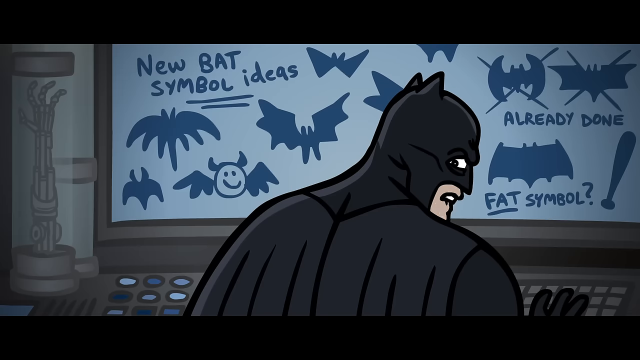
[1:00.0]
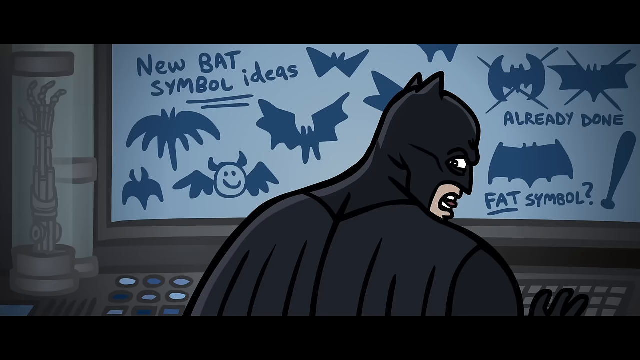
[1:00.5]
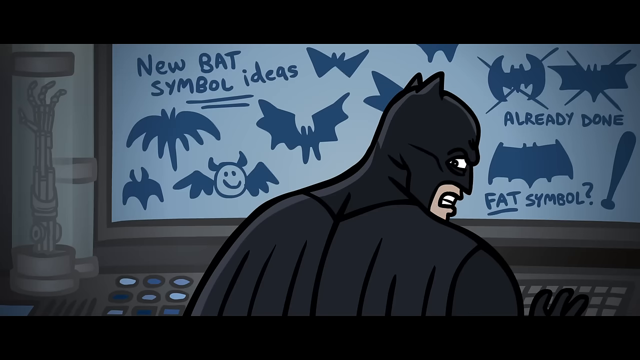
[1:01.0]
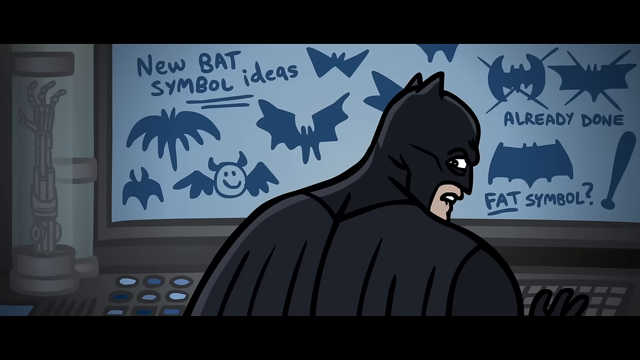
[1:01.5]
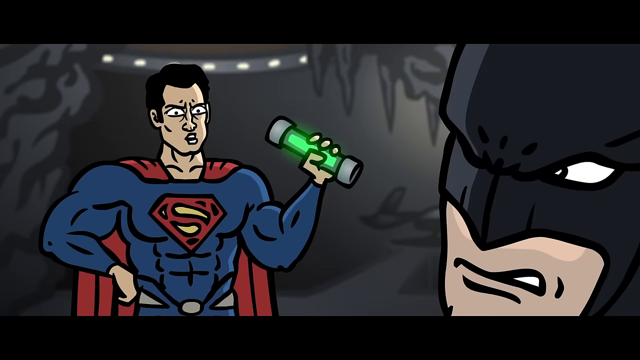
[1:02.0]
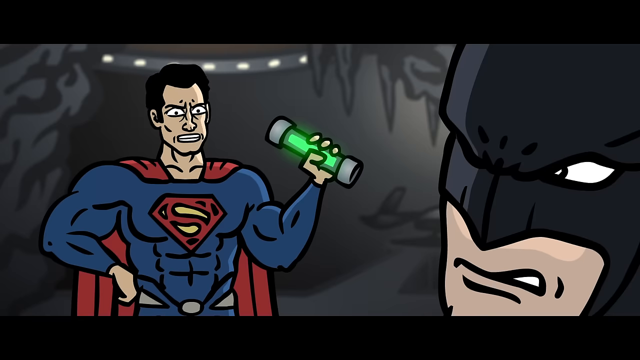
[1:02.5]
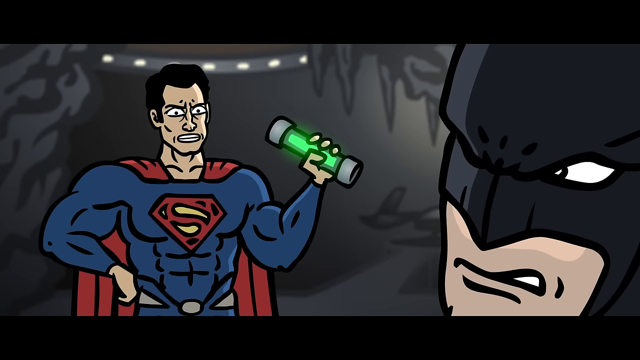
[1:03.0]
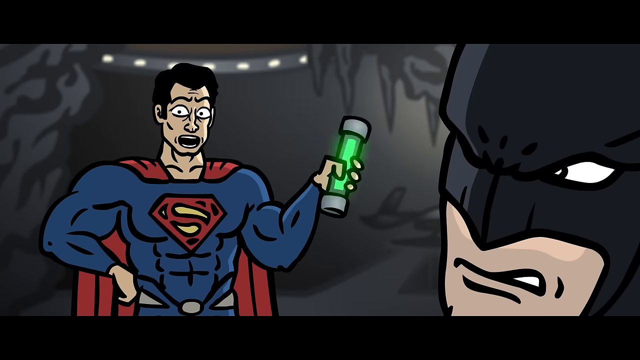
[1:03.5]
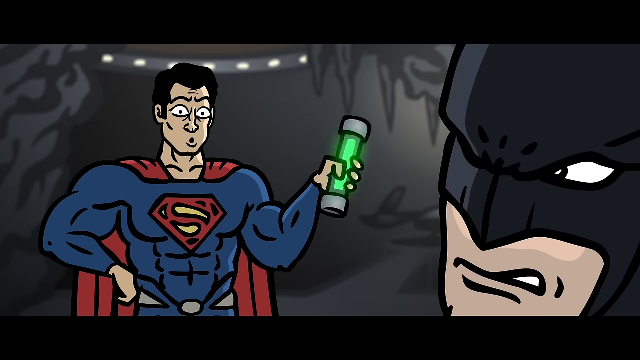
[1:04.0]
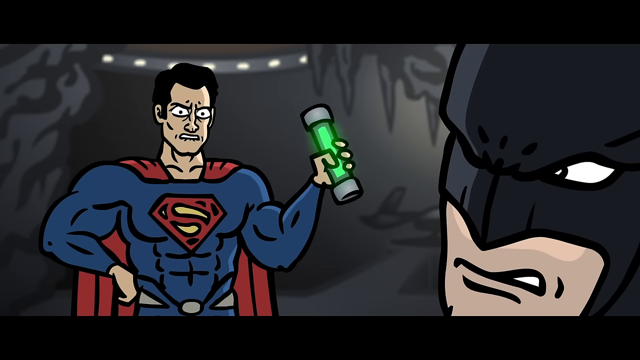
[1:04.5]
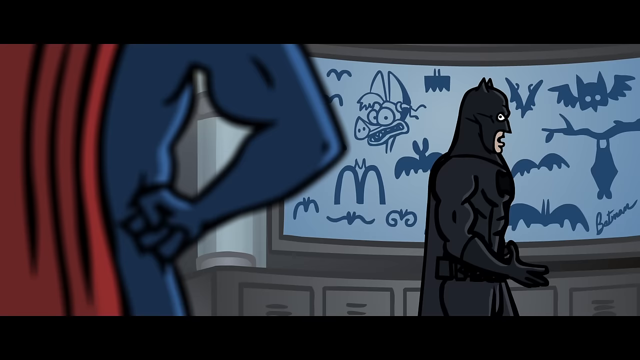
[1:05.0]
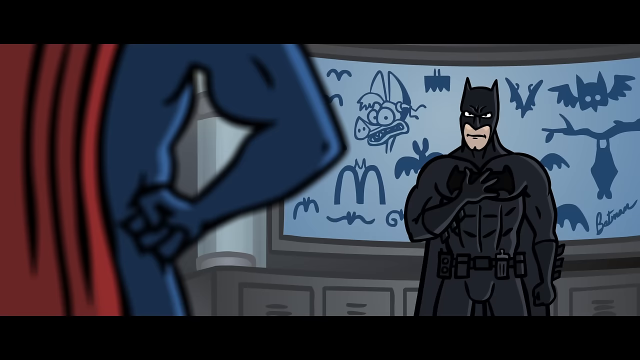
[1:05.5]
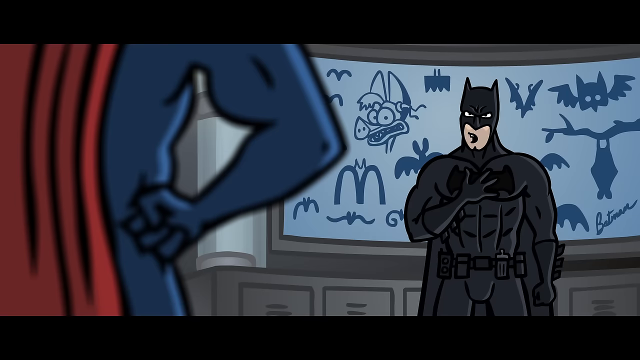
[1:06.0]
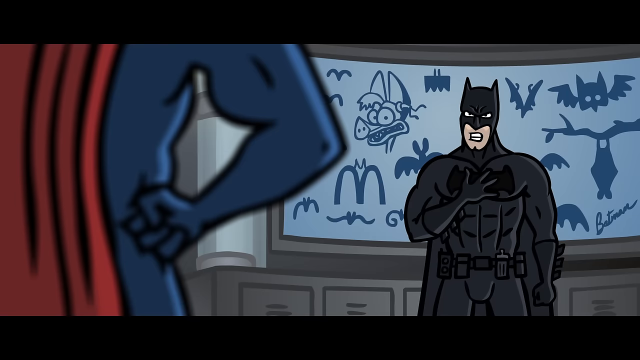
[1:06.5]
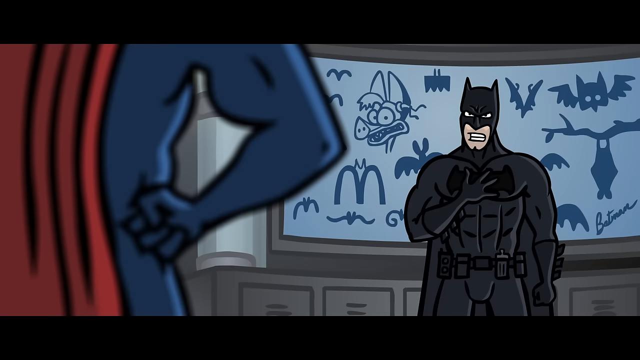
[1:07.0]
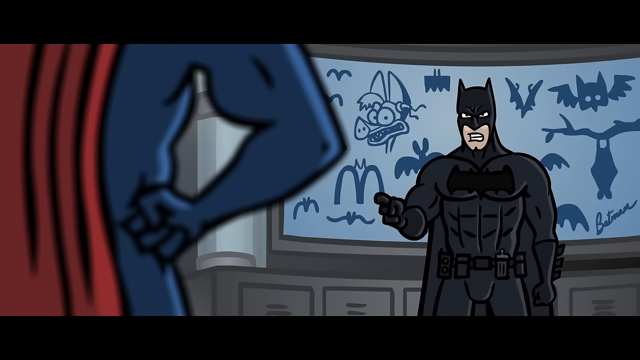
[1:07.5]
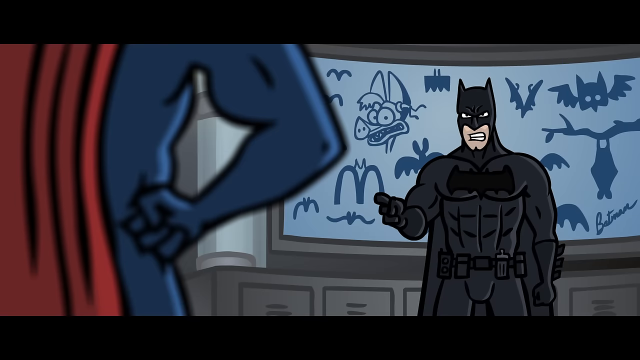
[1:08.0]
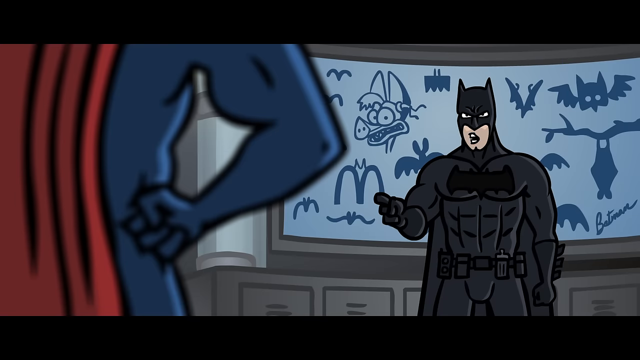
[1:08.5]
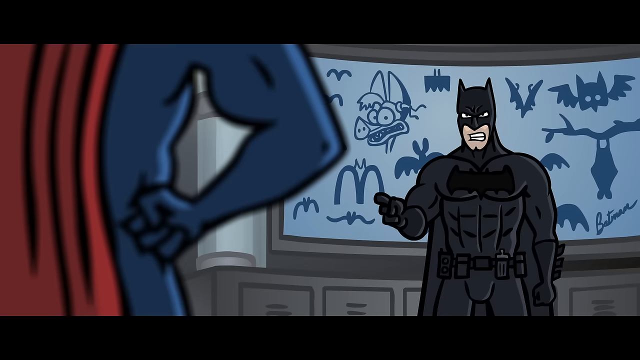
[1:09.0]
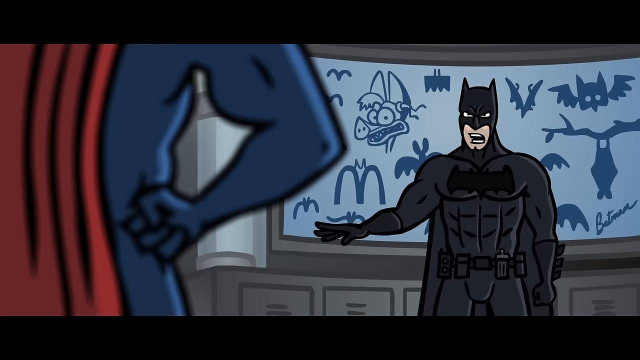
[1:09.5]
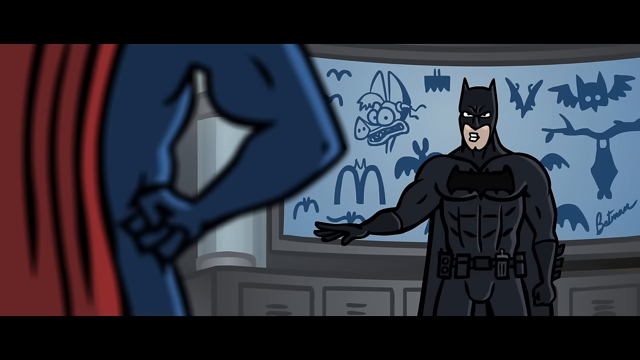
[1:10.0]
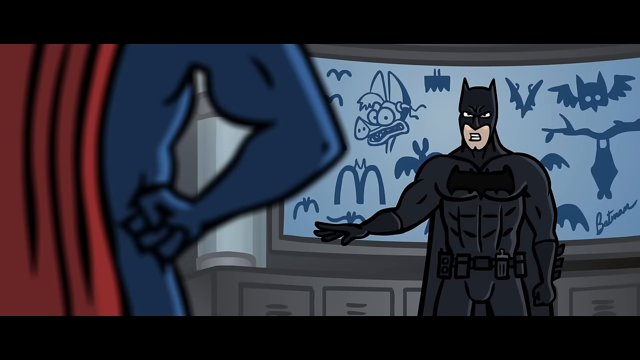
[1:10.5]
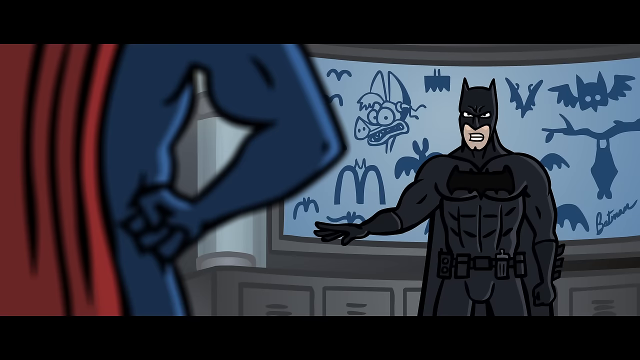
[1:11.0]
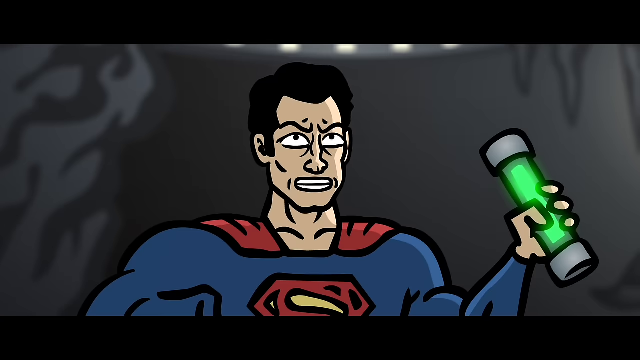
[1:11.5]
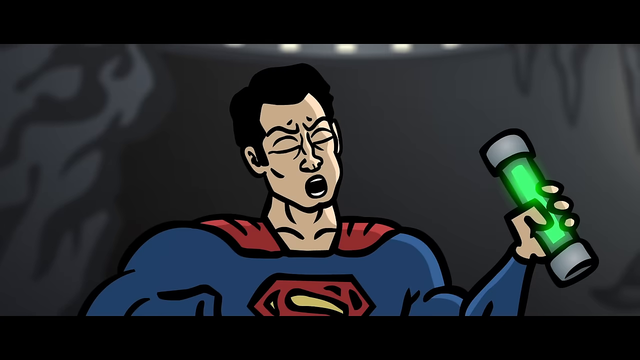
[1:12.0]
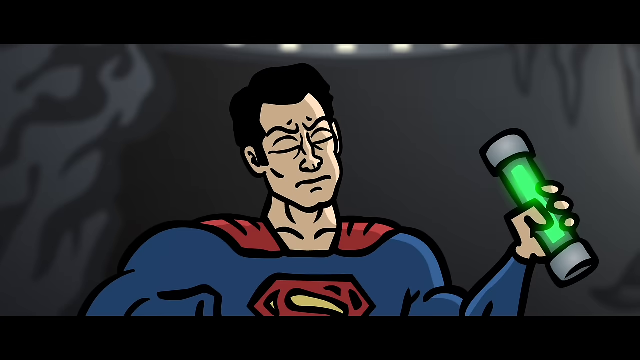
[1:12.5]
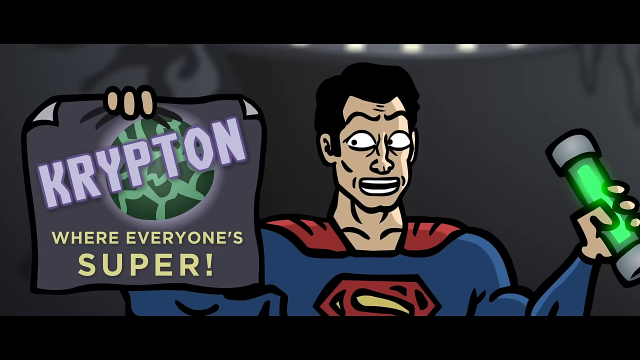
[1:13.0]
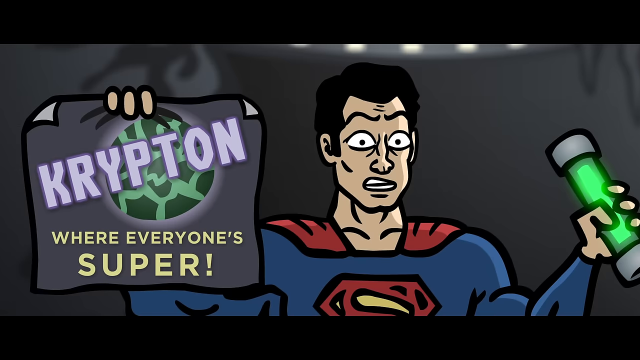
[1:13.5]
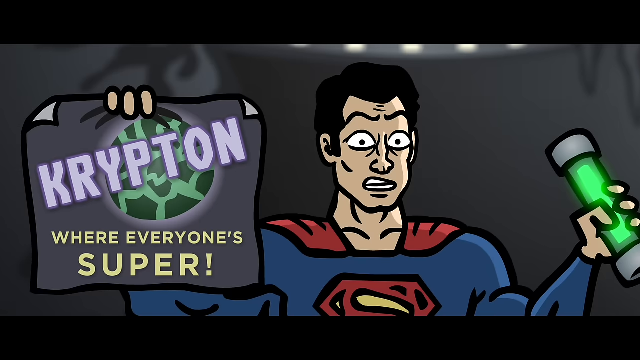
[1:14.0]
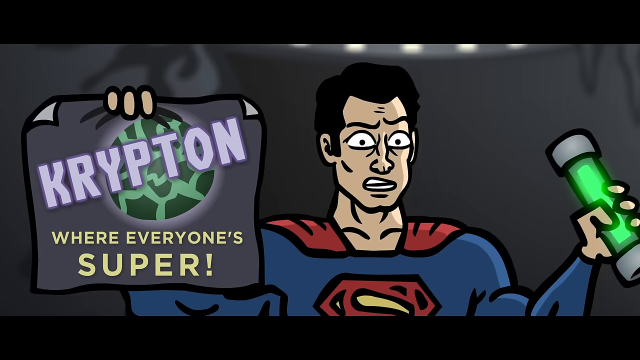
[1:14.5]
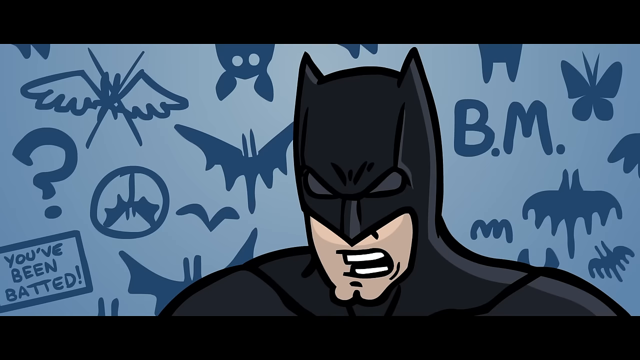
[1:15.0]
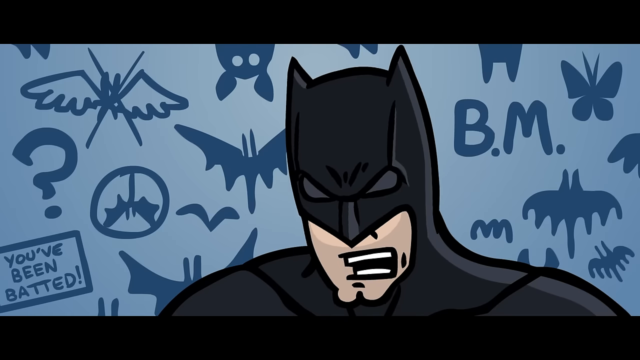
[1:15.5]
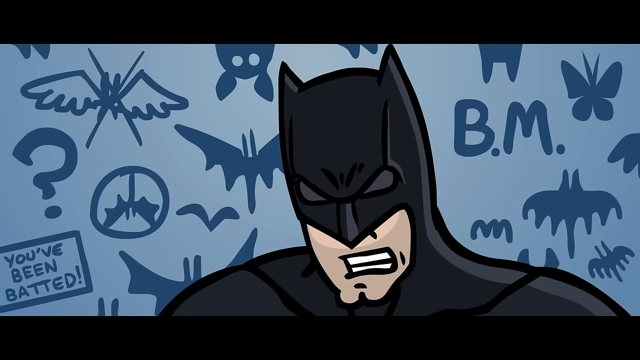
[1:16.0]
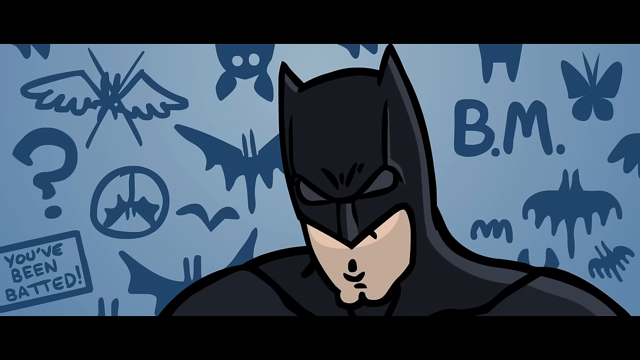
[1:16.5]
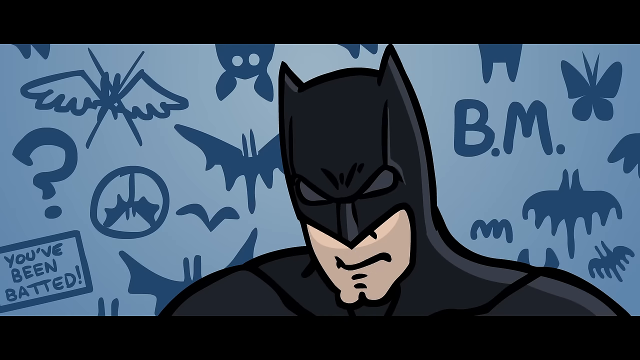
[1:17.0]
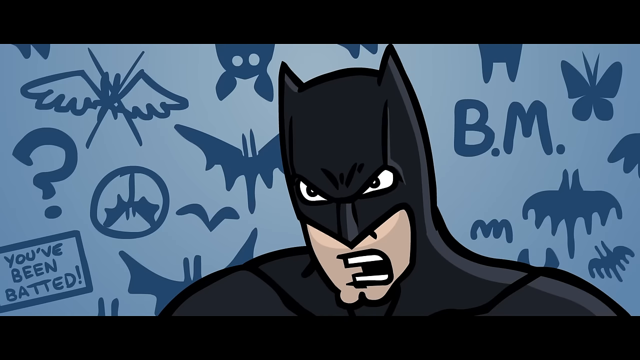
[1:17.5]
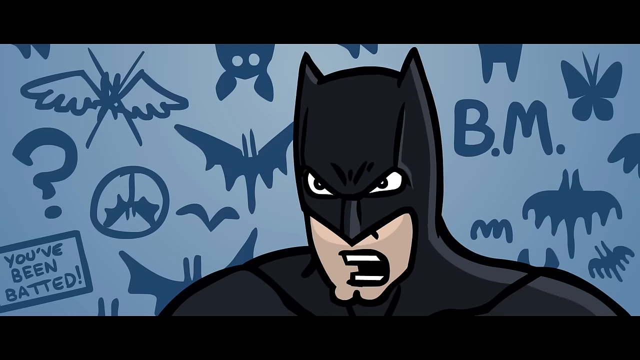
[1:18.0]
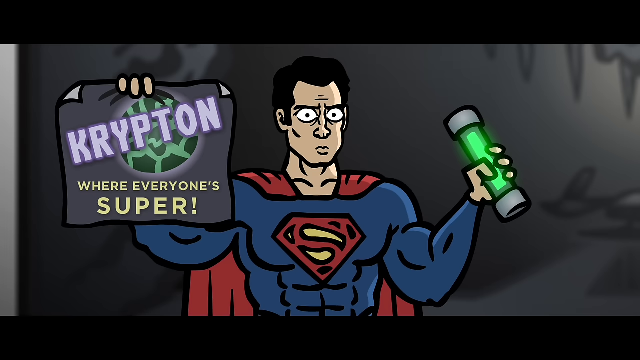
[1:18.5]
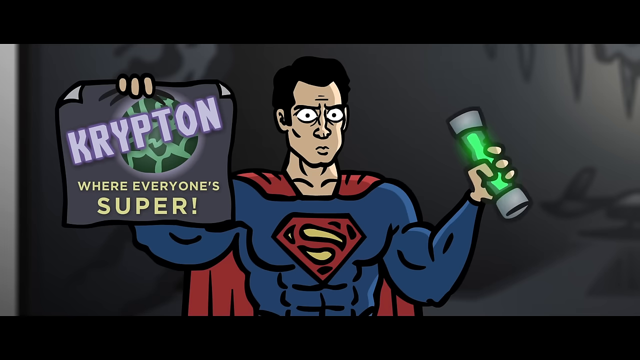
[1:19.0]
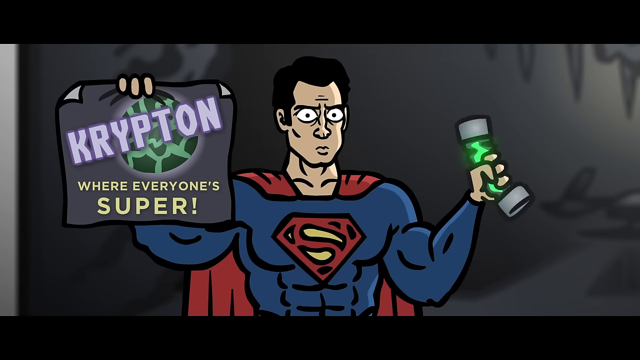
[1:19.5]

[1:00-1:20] Batman sits at a console, seen from behind, with a bunch of keys in front of him; his right hand appears to be on the buttons. The screen in front of him says "new bat symbol ideas" and is covered with pictures of many different bat-shaped silhouettes. Batman looks back over his right shoulder and seems to be saying something to whoever is behind him. It is Superman, who has his right hand on his hip and holds a tube of kryptonite in his left hand. He looks upset with Batman and waggles the tube of kryptonite. Batman stands, turned around to face Superman, with his right hand over his chest and his left hand down at his side, and says something to him. The view then zooms in close on Superman.